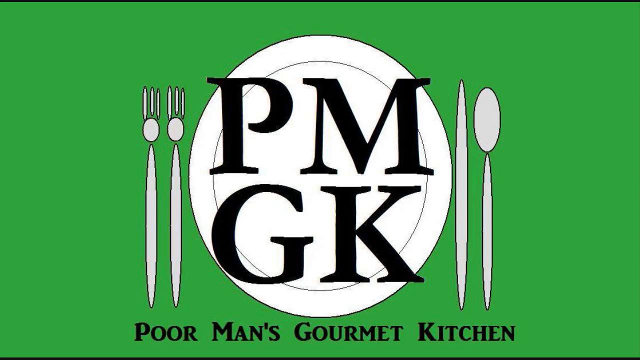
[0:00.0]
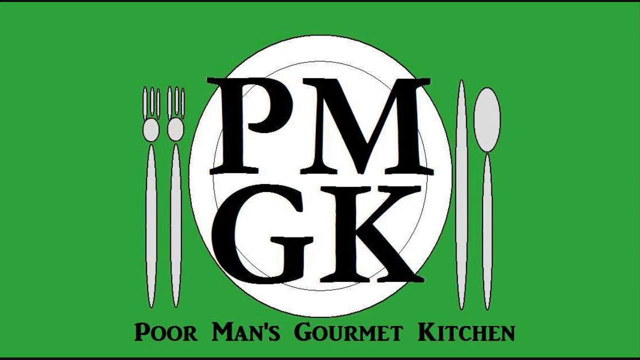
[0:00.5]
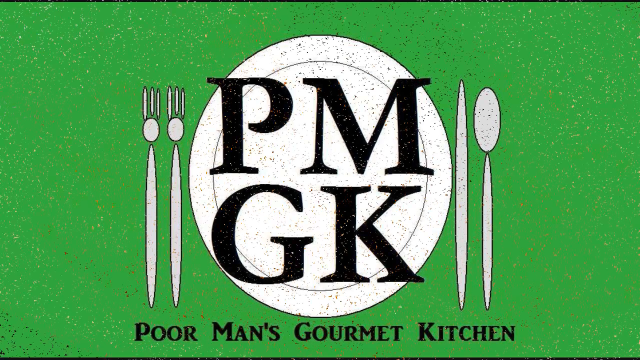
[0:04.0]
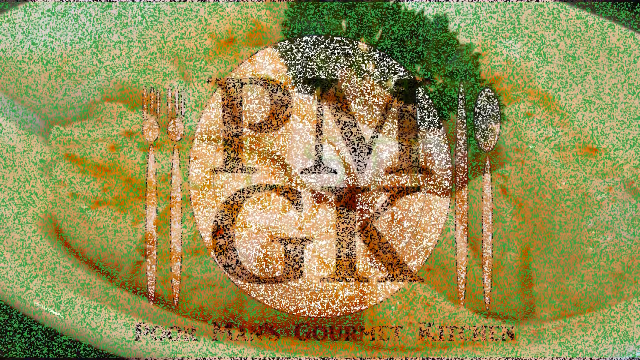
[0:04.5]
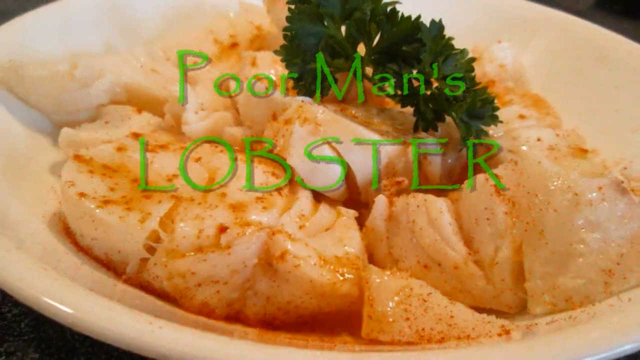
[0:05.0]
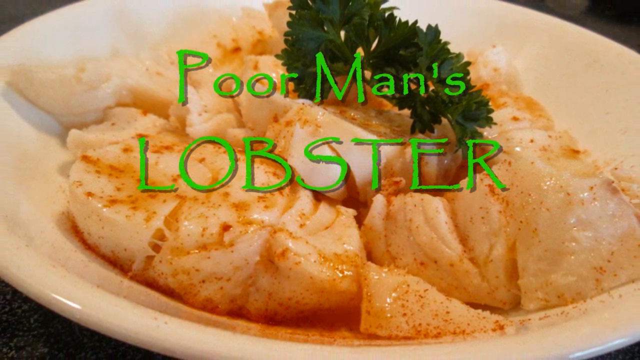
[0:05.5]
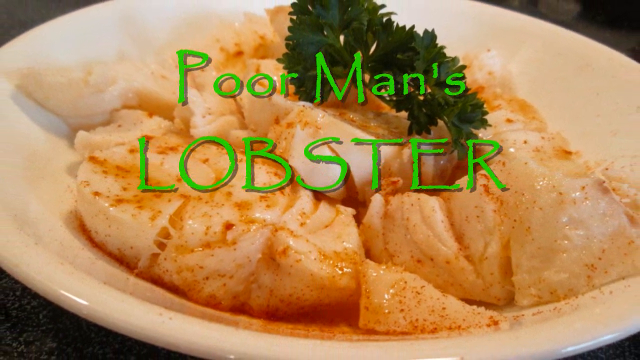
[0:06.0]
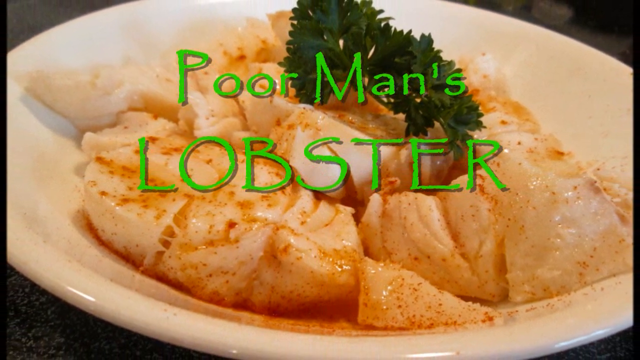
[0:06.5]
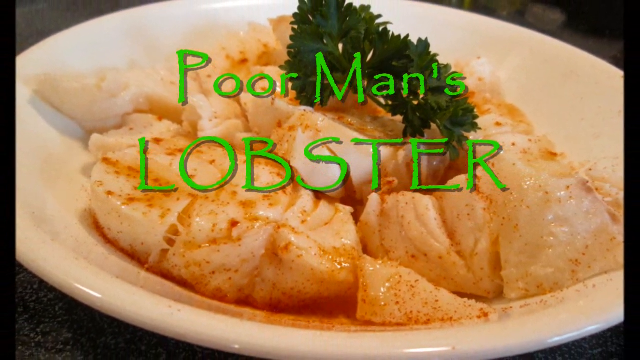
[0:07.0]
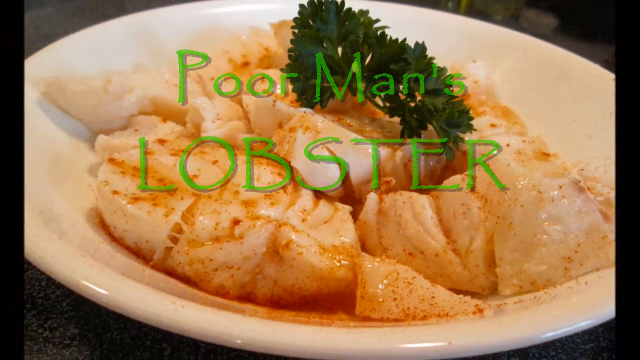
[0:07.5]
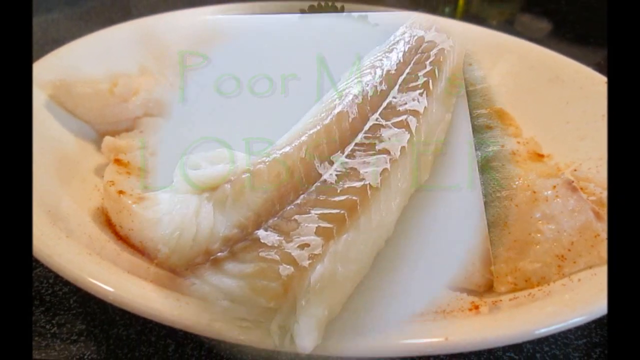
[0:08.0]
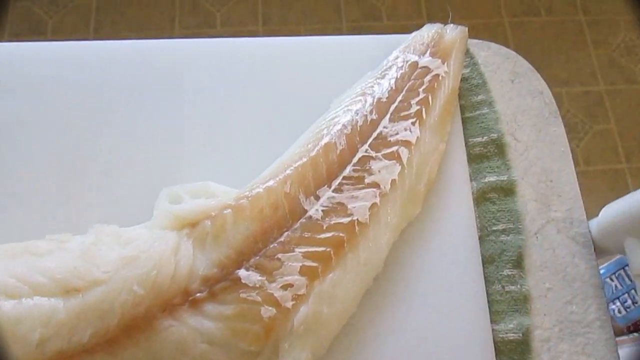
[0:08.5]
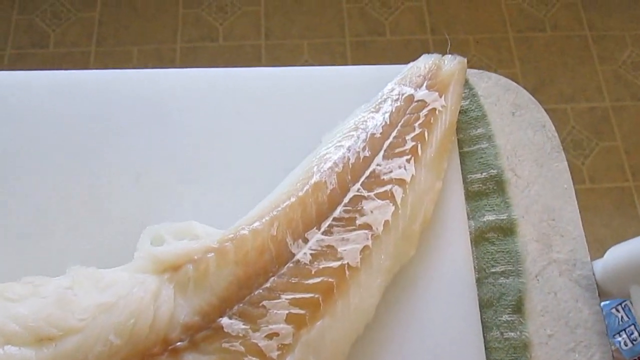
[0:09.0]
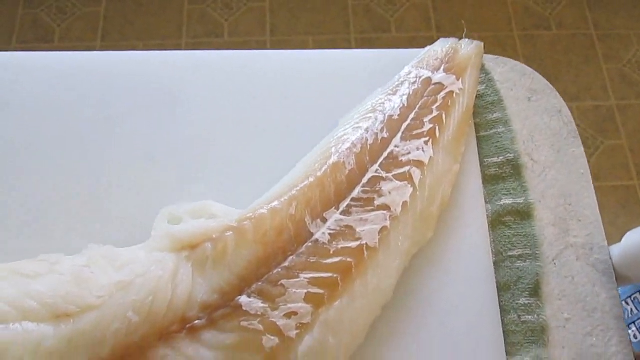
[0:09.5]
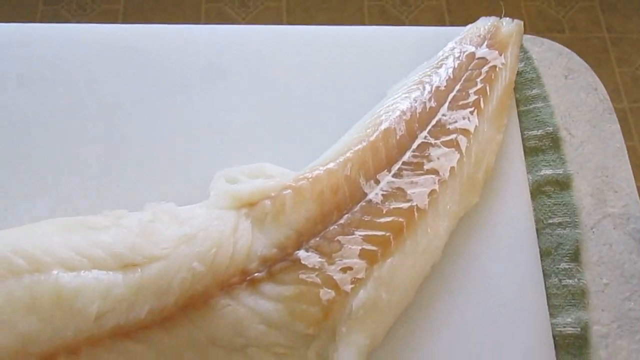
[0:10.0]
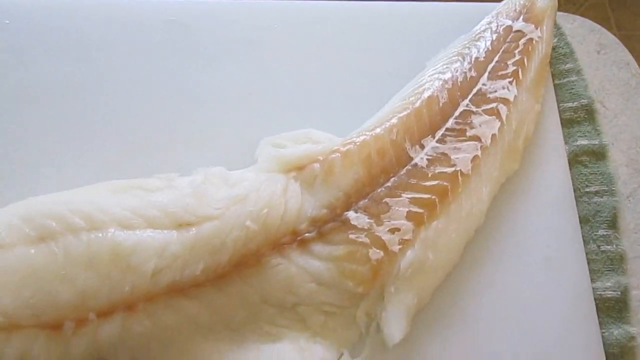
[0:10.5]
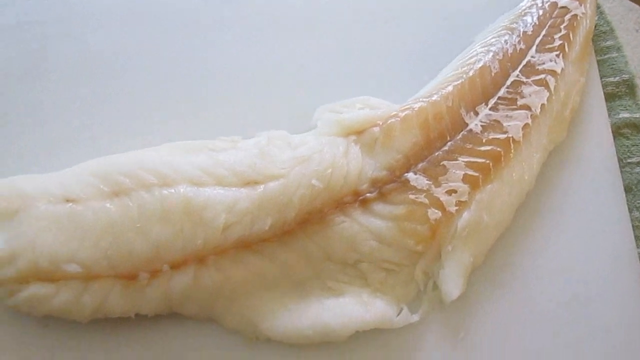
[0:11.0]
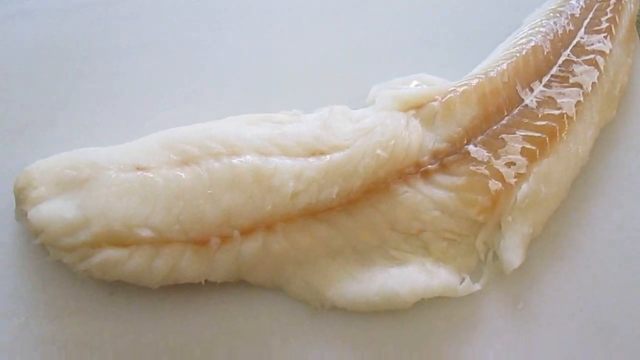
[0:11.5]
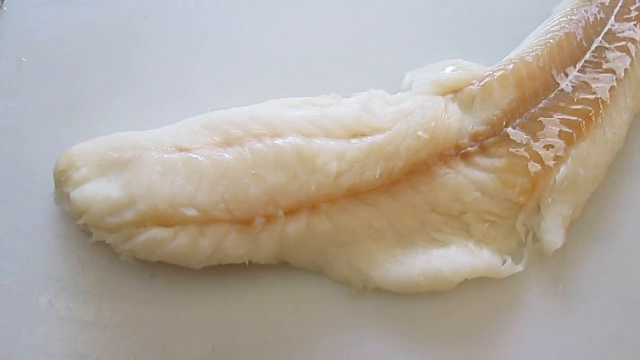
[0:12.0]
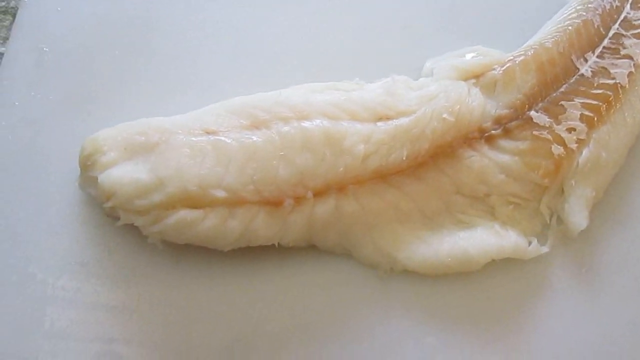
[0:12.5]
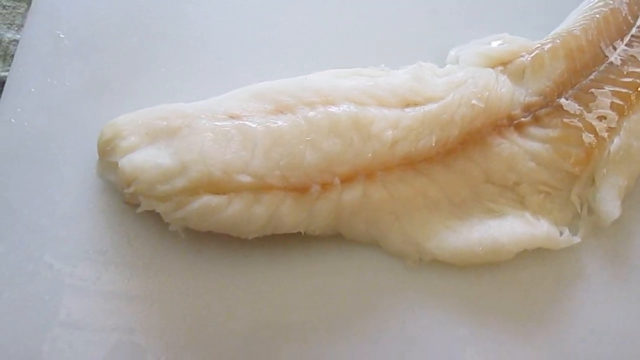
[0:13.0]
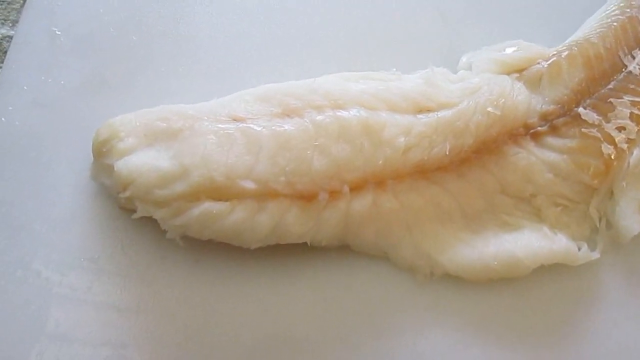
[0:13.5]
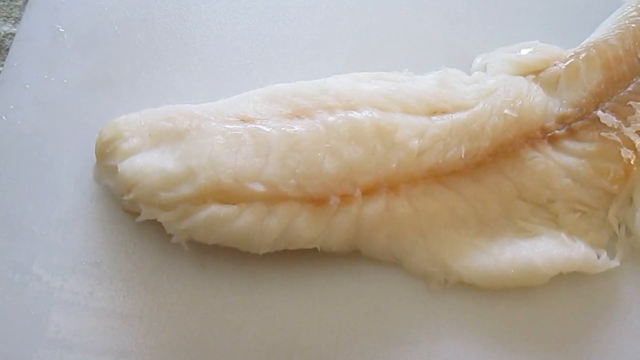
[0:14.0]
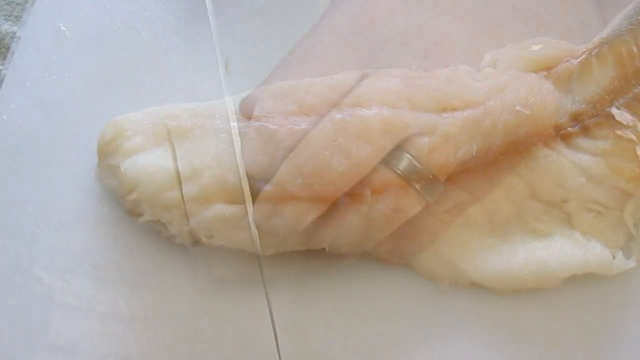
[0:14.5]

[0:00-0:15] The video opens on the Poor Man's Gourmet Kitchen logo against a green backdrop: a white plate bearing the black letters "P.M.G.K.", with "P.M." over "G.K.", two forks on the left of the plate and a spoon and a knife on the right. The scene changes to the title "Poor Man's Lobster" written in green, along with a long piece of white fish that looks about 12 inches long. The camera pans to the edge of the fish, and a hand cuts it into pieces maybe one to two inches wide; the first two pieces are cut. The image returns to the P.M.G.K. logo on the green backdrop, and then the scene moves to what looks like the finished product: the words "Poor Man's Lobster" and a plate of cooked fish with what looks like paprika and parsley on top.